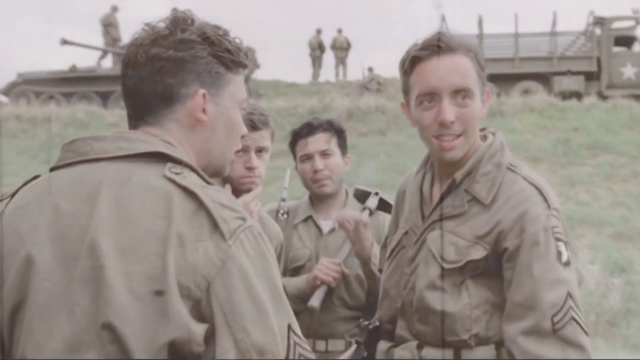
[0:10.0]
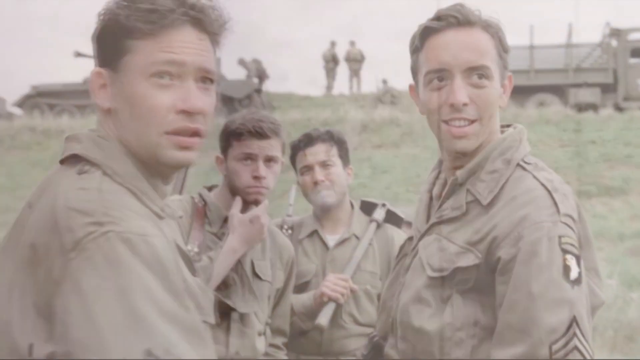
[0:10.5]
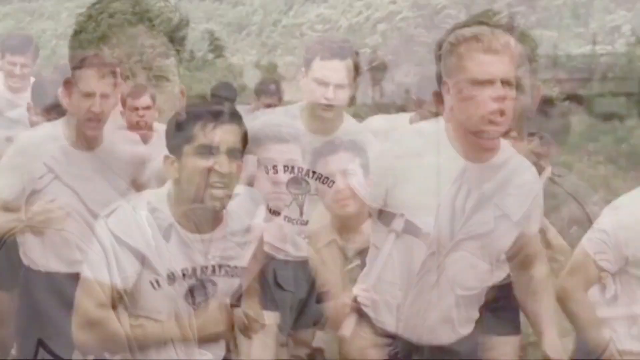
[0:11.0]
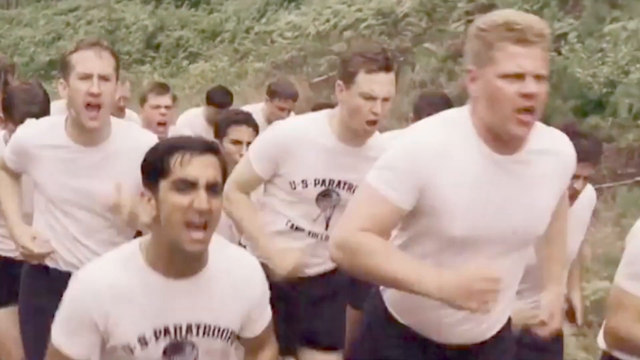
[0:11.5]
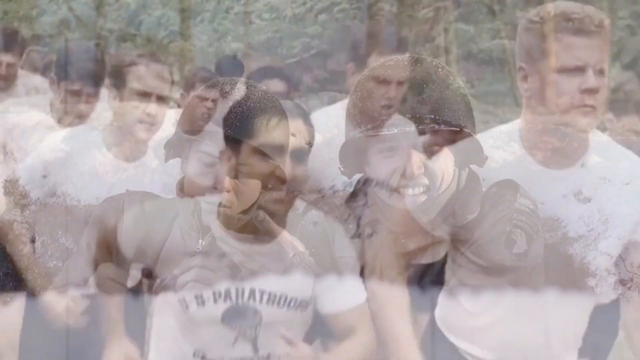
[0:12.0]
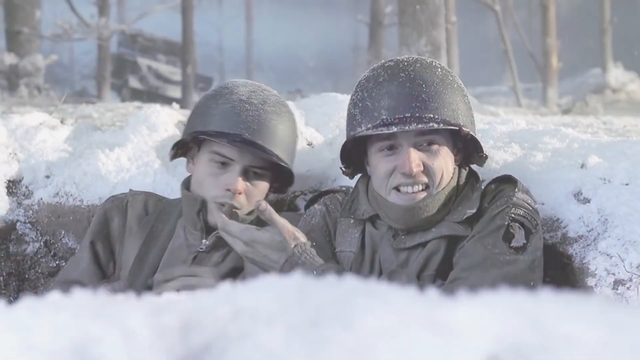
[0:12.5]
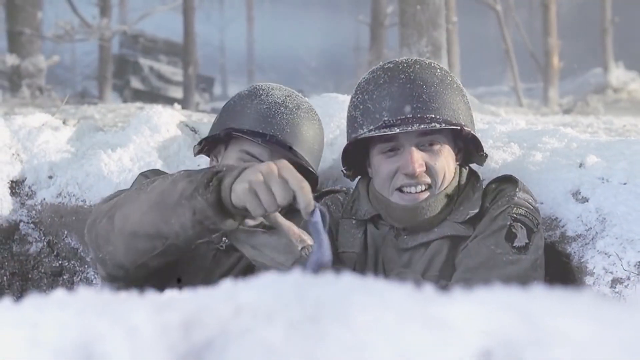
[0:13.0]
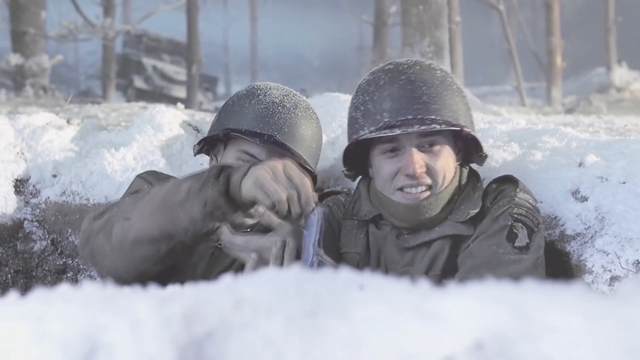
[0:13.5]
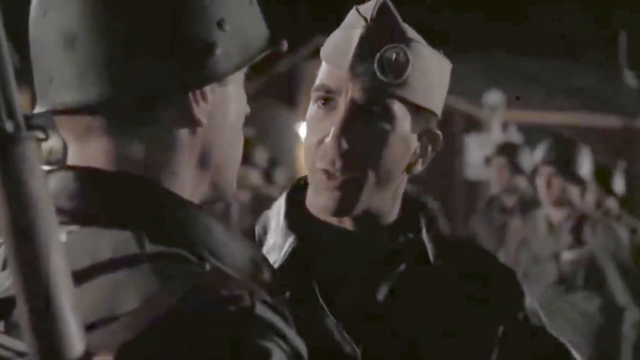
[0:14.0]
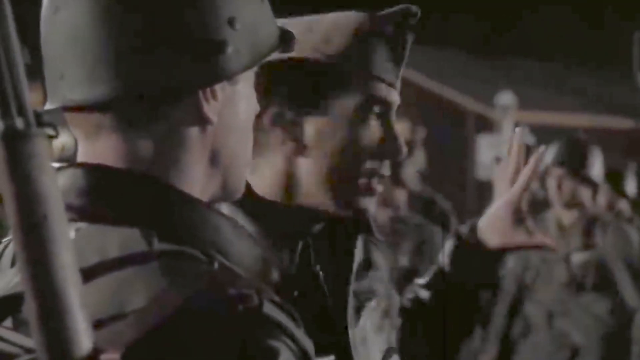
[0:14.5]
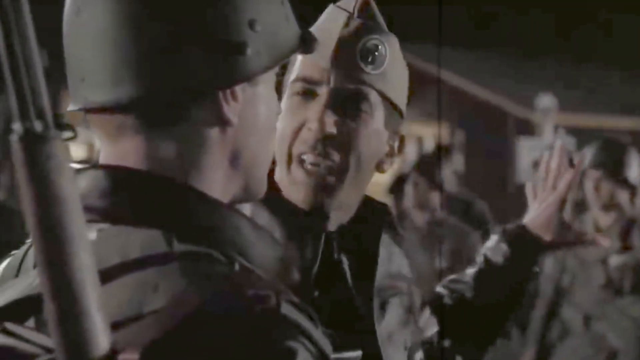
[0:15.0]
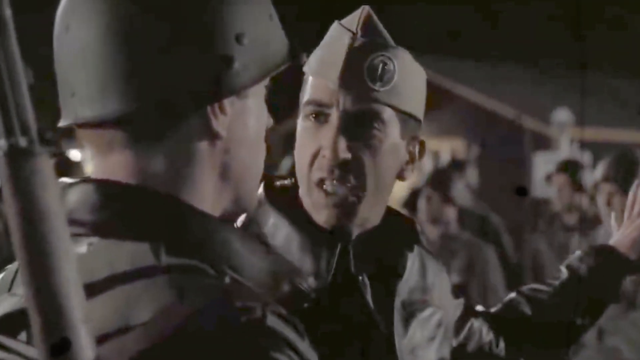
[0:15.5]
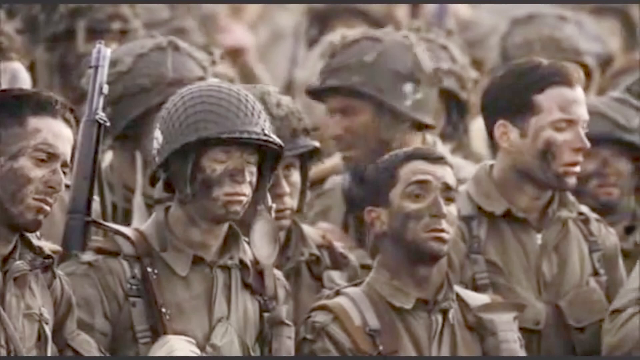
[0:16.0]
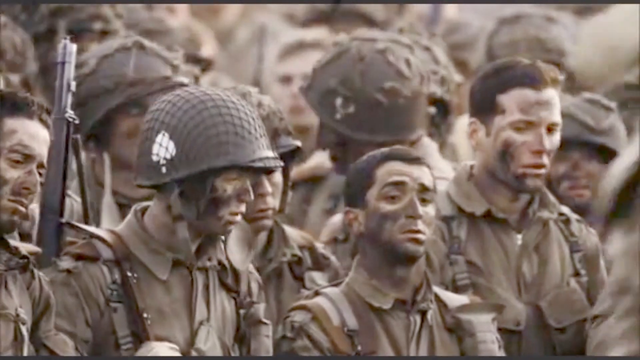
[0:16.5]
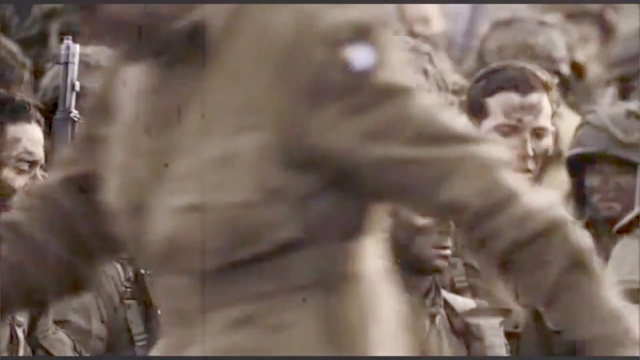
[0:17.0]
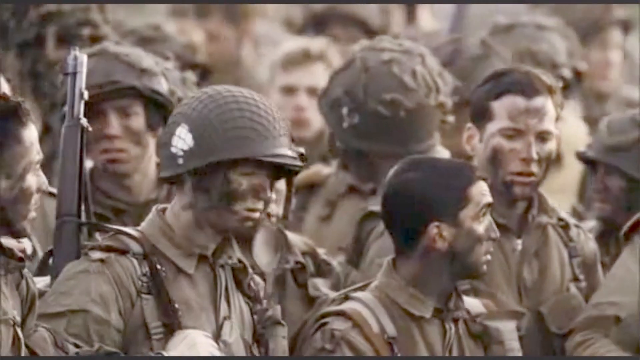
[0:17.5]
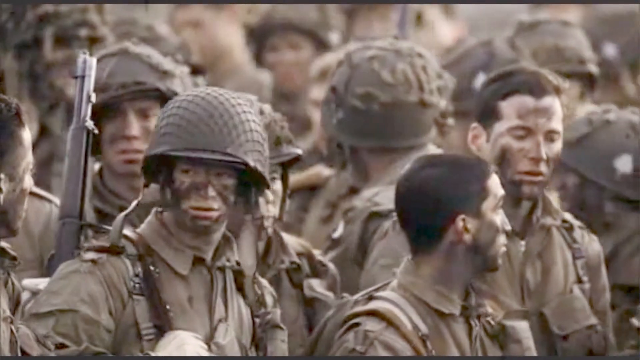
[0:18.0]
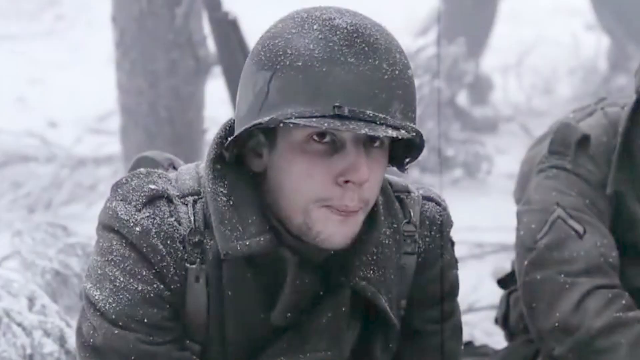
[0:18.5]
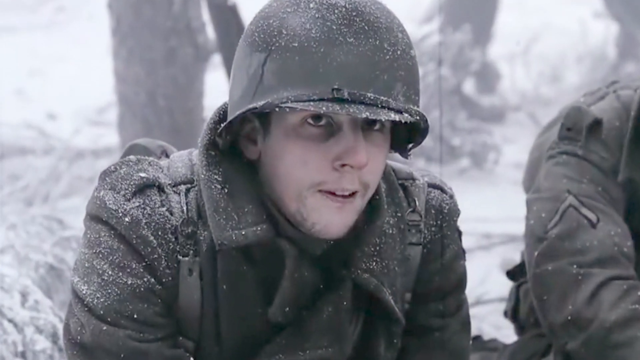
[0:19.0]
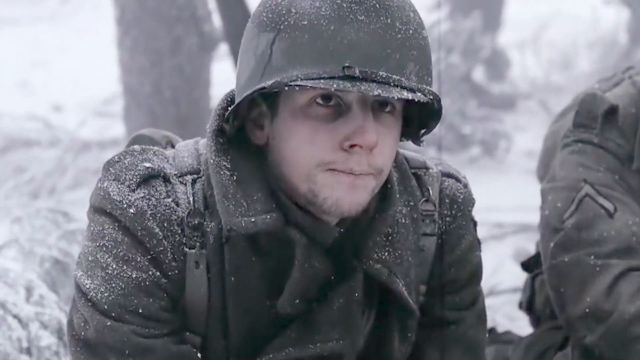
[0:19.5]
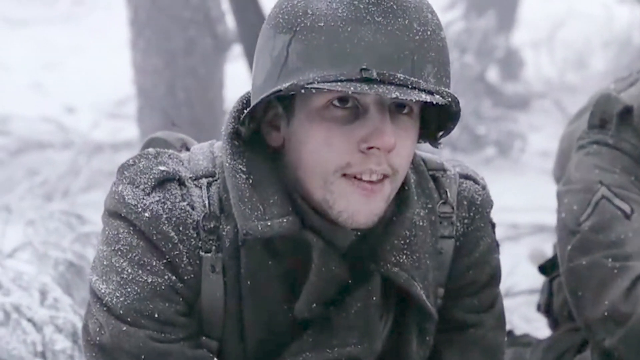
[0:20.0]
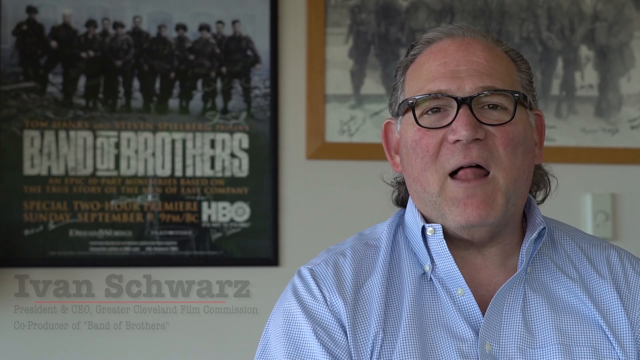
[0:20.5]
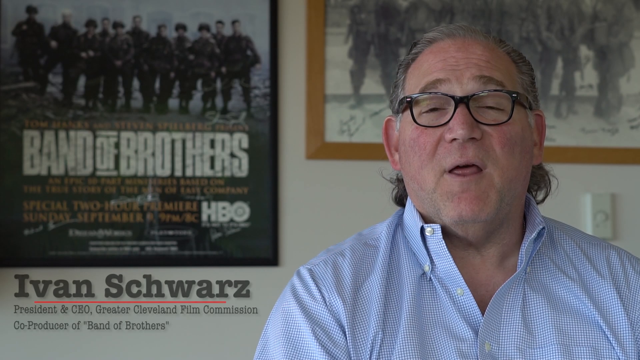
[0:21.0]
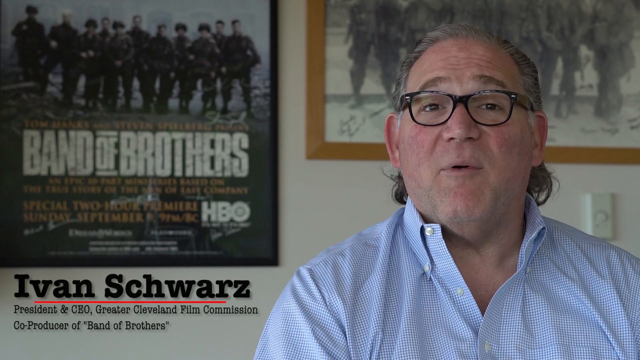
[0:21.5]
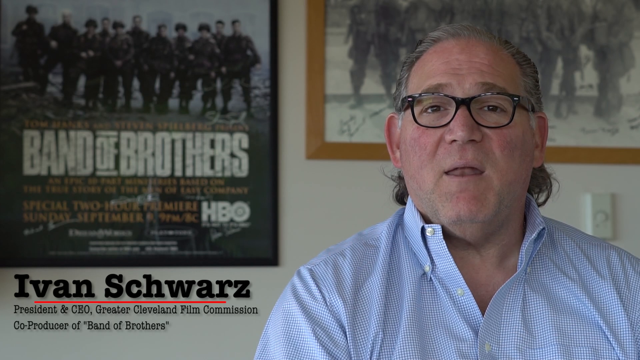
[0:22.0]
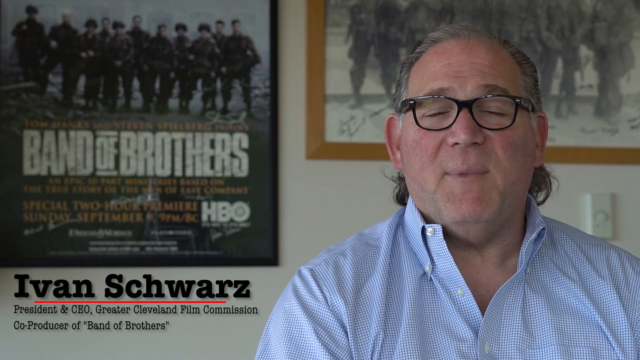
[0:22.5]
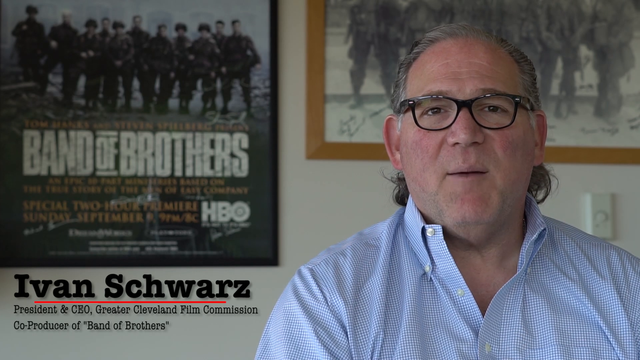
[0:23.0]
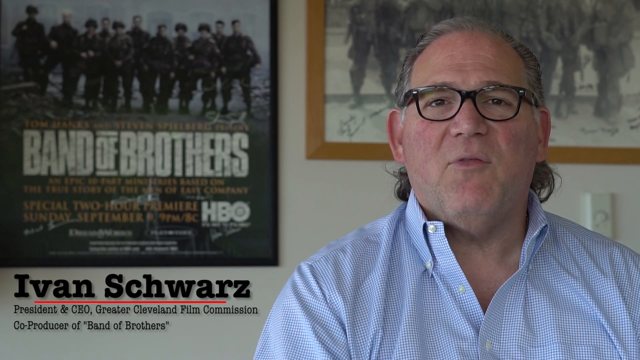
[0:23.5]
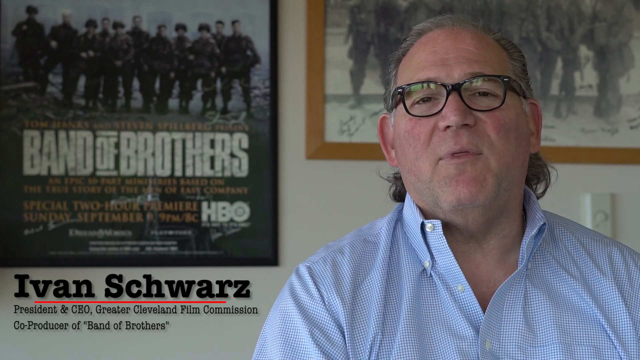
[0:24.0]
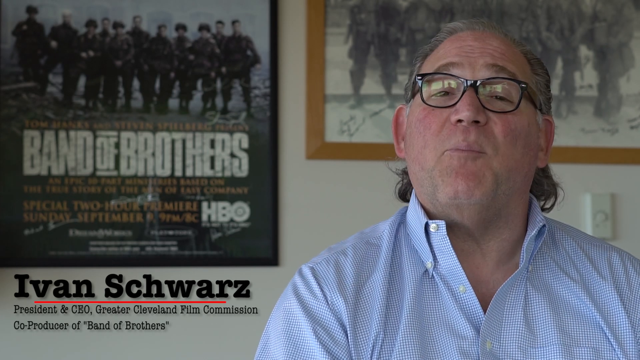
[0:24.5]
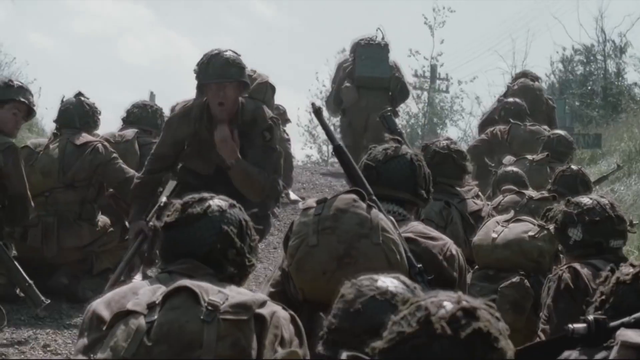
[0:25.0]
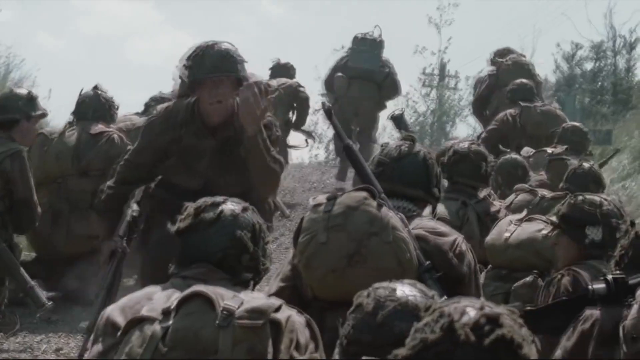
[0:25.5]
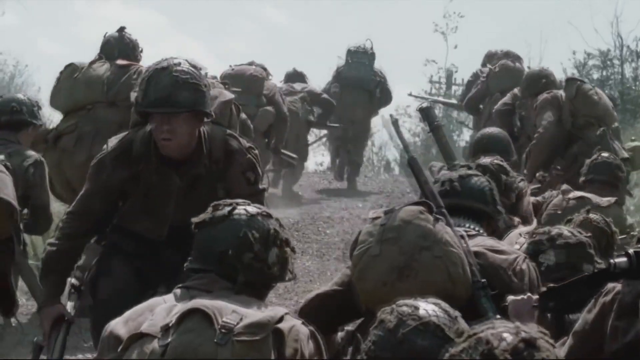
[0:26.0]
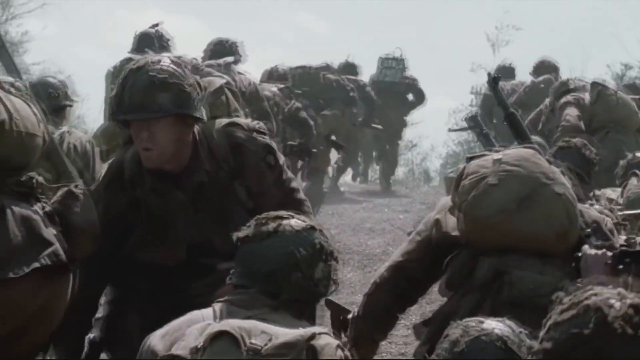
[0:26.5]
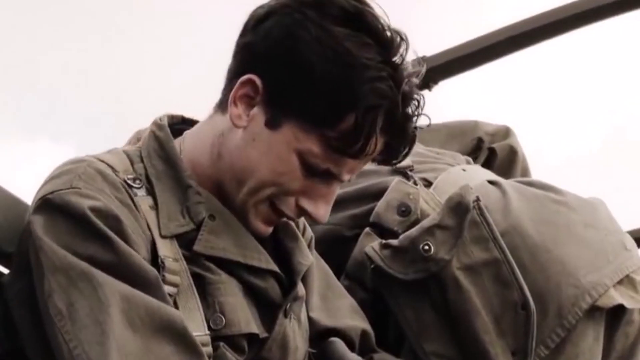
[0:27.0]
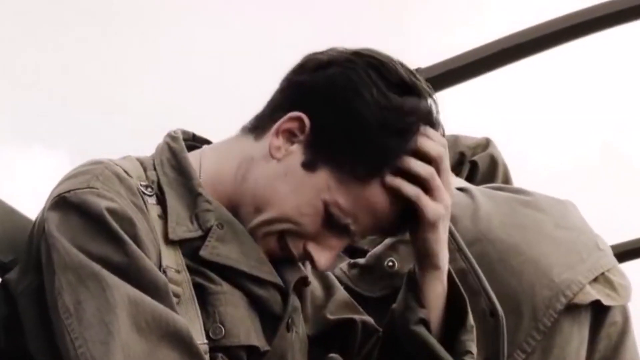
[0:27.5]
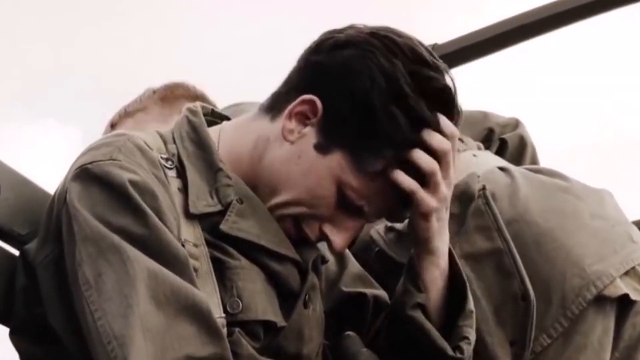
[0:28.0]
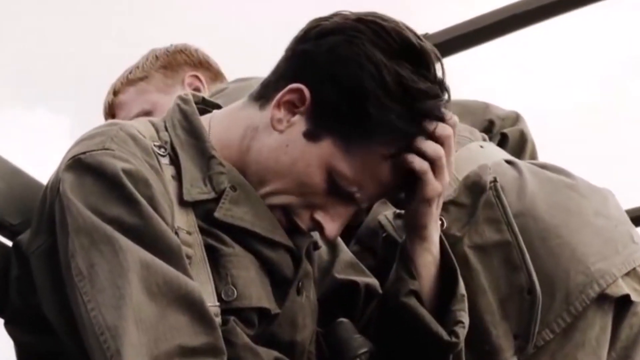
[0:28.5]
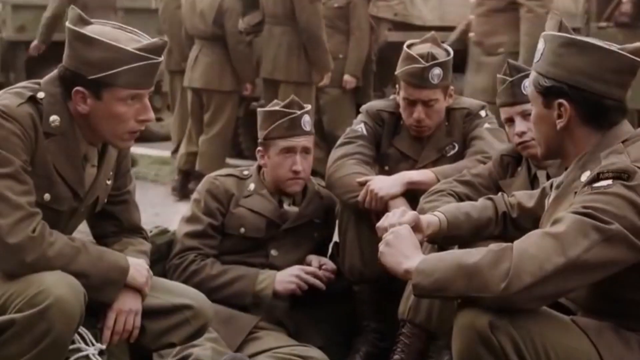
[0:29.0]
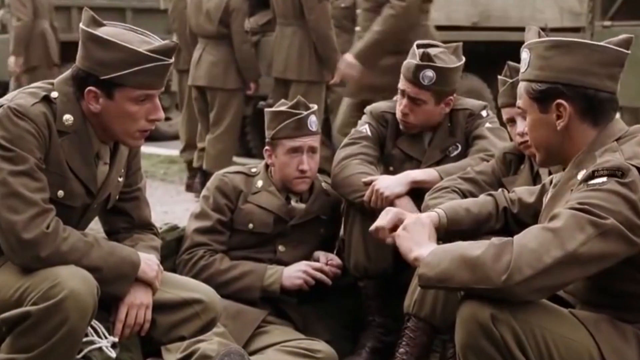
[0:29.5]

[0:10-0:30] Outside, military vehicles are in the distance and some soldiers are standing. Four soldiers are close to the camera; one looks like he is smoking and one carries what looks like a handgun. Smiling men appear, and apparently new recruits run in exercises, training to be paratroopers, with green mountainous terrain or trees to their left. Two soldiers are in a snowy area, in a trench, with a lot of snow and a few trees in the background. A nighttime view shows a soldier talking to another, maybe a commander. Soldiers with dirt on their faces and guns on their backs appear in military green colors. Another soldier is shown in winter, with a little snow on his helmet and snow and trees in the background. A man, possibly the director of a movie, speaks; he wears a blue shirt and black-rimmed sunglasses and has grayish hair, and "Band of Brothers" appears in the background.